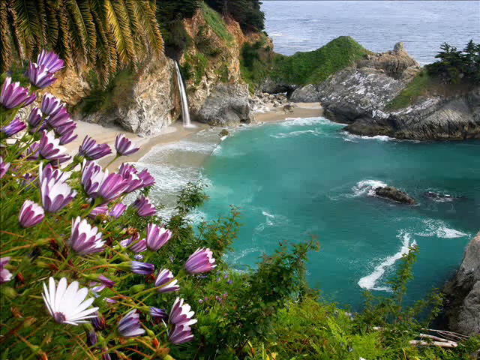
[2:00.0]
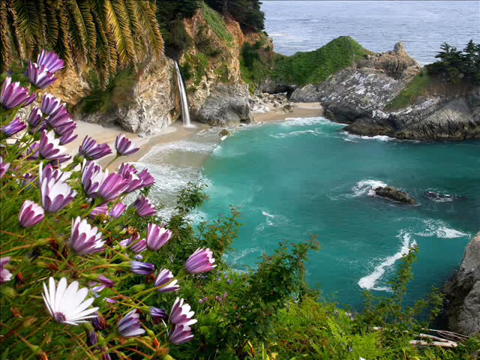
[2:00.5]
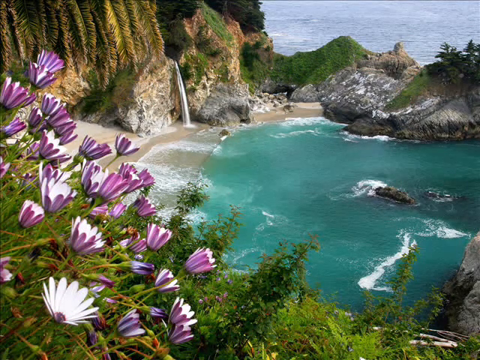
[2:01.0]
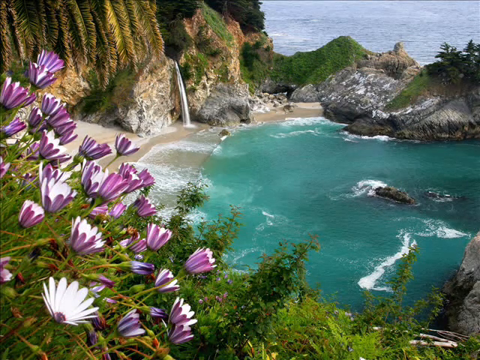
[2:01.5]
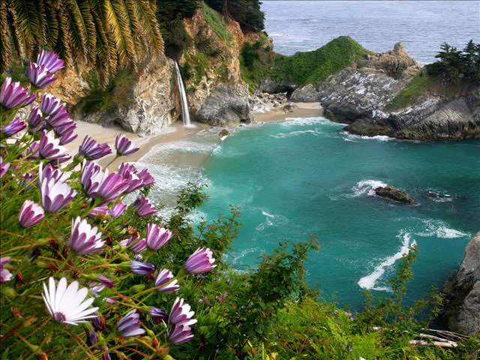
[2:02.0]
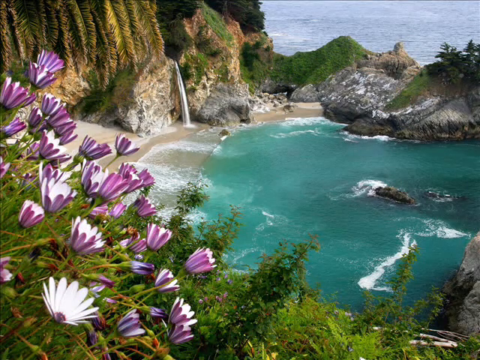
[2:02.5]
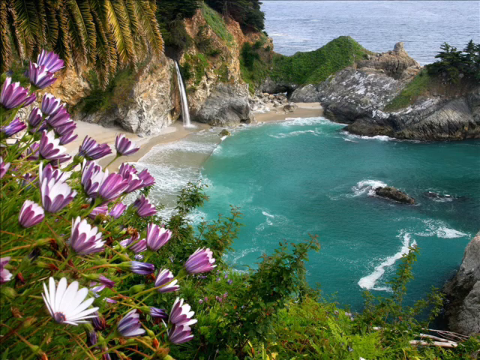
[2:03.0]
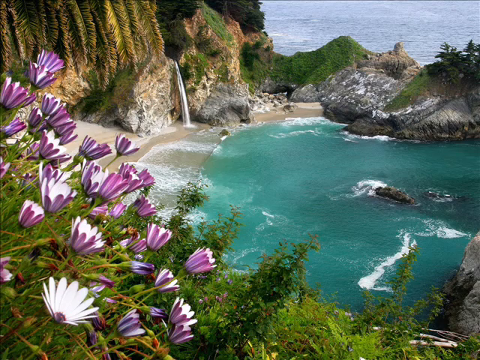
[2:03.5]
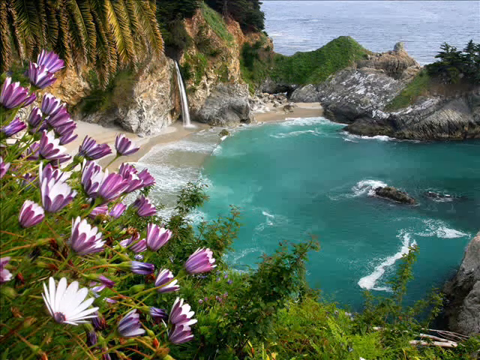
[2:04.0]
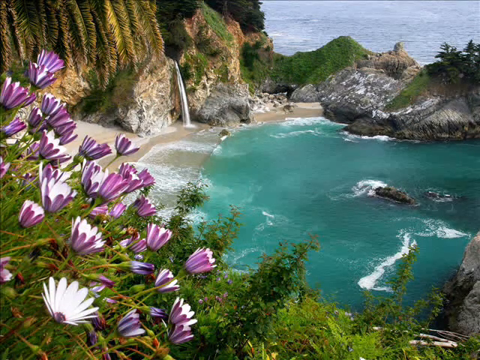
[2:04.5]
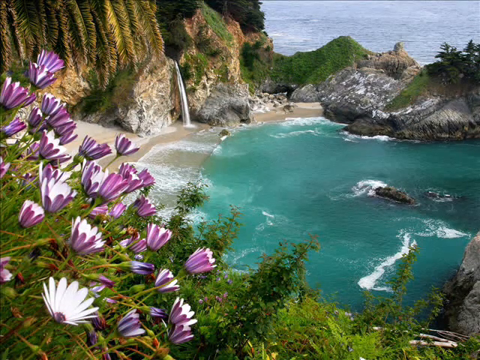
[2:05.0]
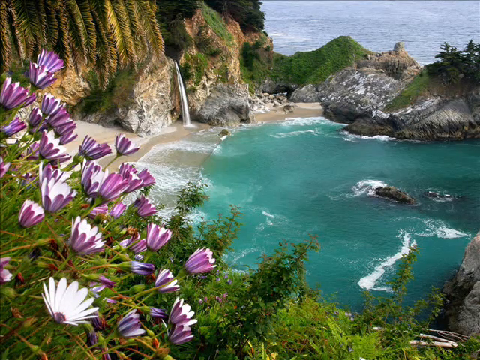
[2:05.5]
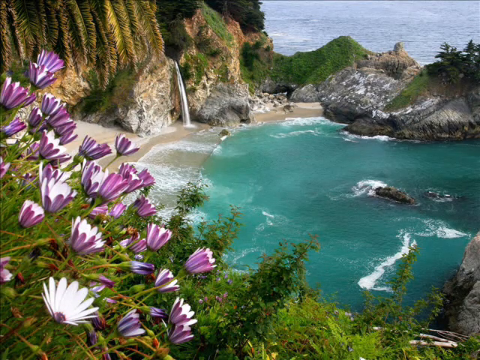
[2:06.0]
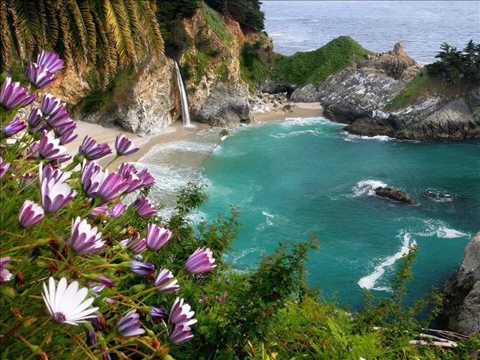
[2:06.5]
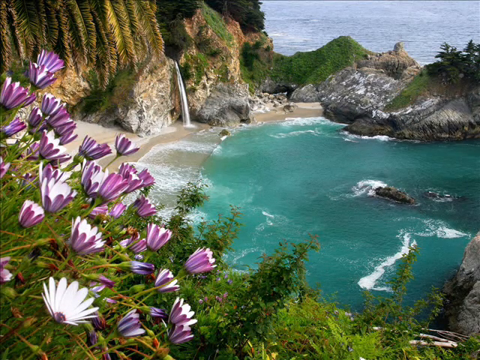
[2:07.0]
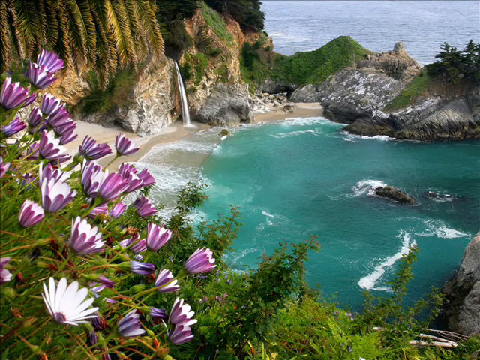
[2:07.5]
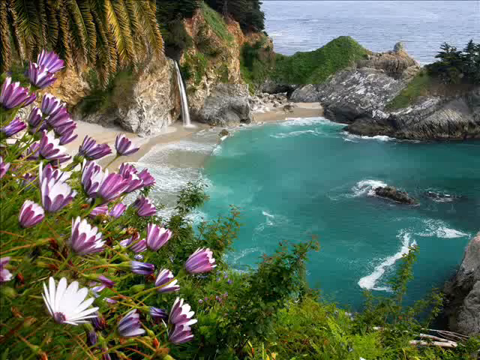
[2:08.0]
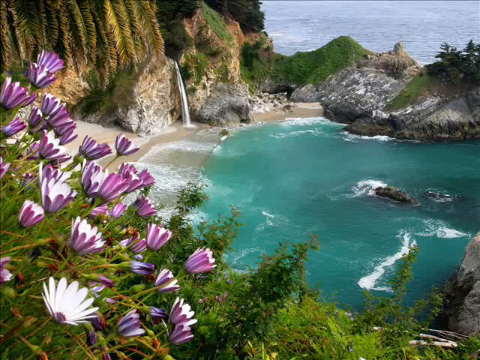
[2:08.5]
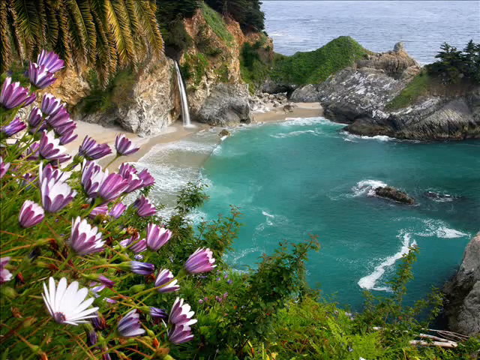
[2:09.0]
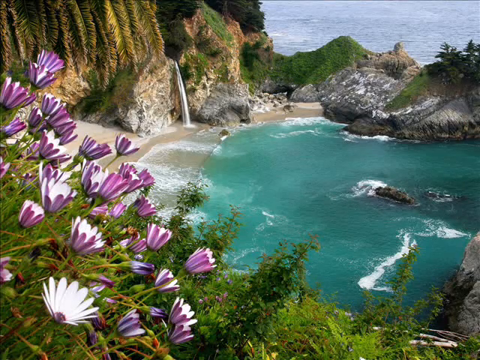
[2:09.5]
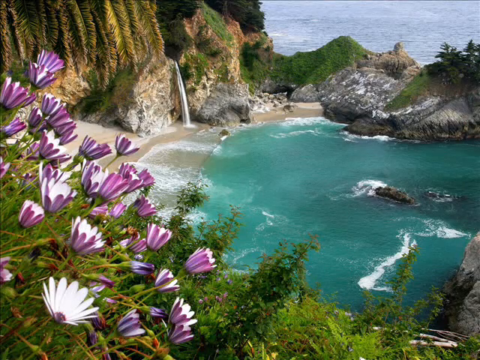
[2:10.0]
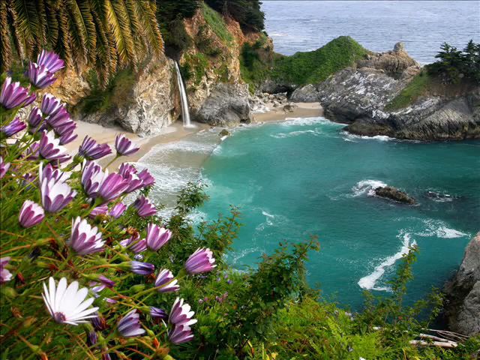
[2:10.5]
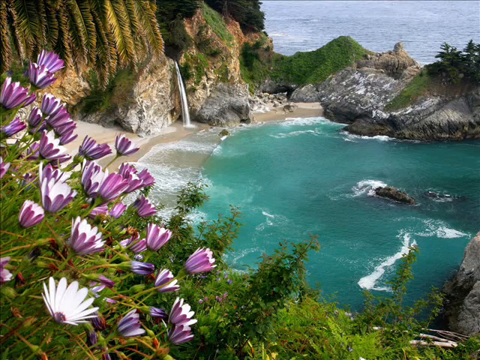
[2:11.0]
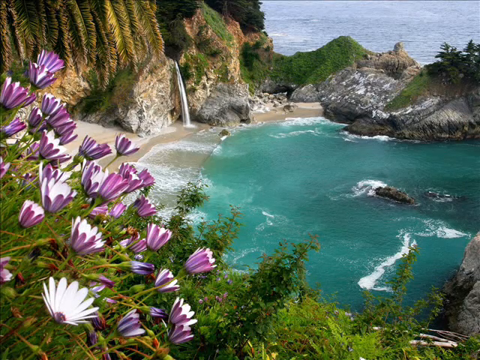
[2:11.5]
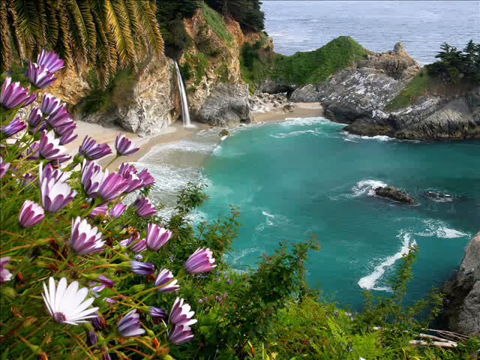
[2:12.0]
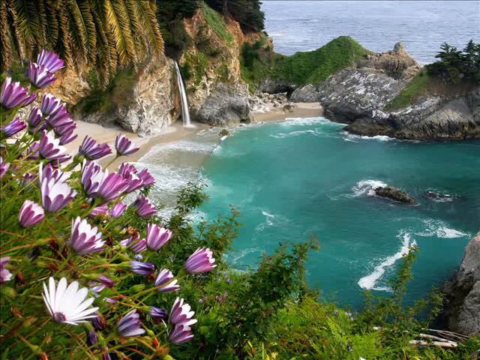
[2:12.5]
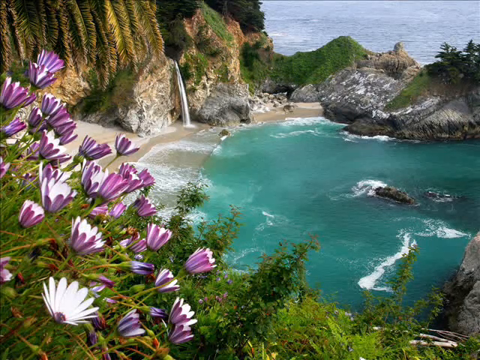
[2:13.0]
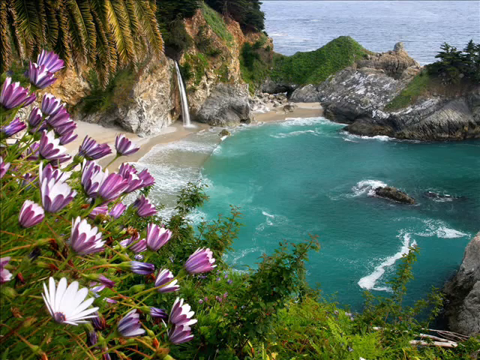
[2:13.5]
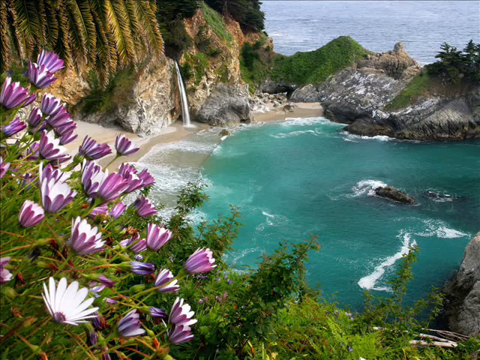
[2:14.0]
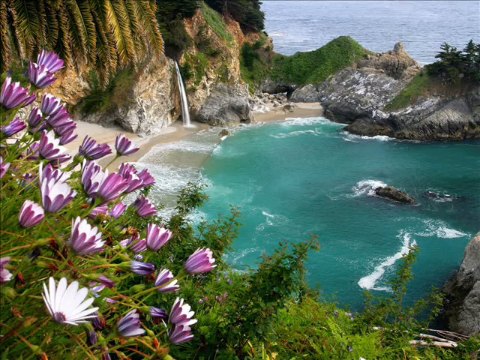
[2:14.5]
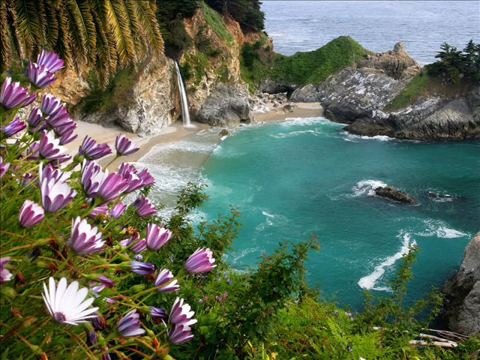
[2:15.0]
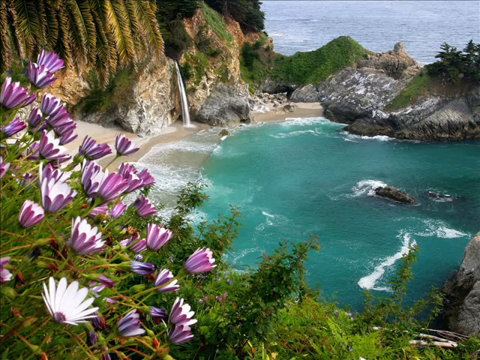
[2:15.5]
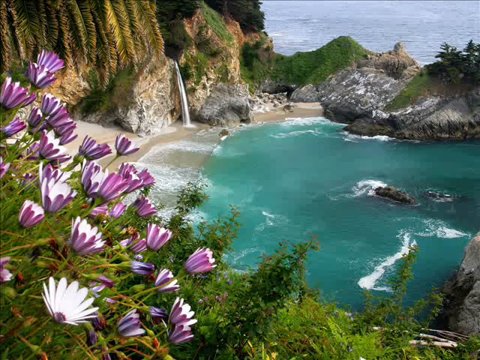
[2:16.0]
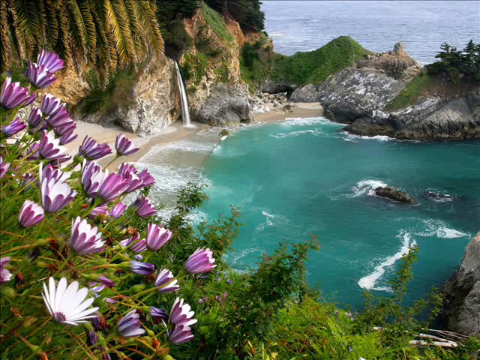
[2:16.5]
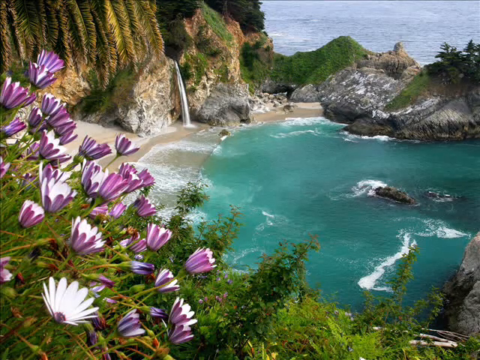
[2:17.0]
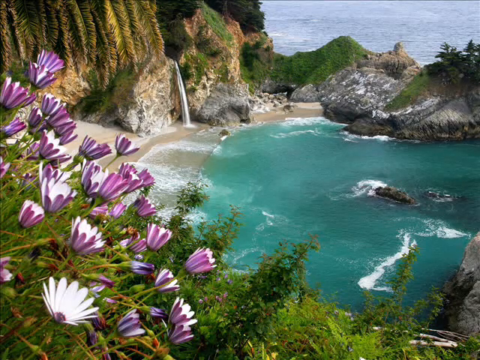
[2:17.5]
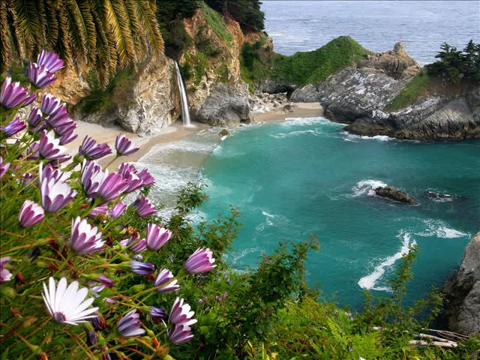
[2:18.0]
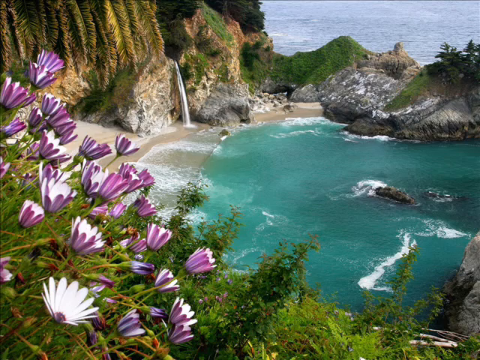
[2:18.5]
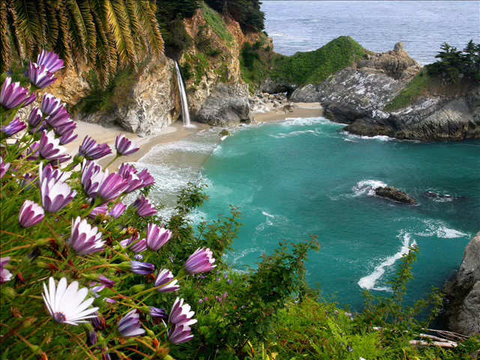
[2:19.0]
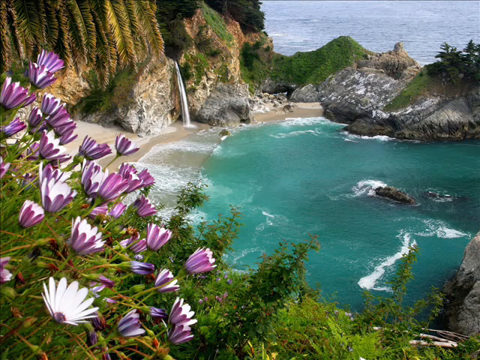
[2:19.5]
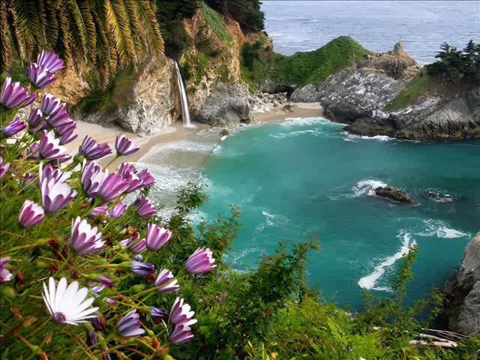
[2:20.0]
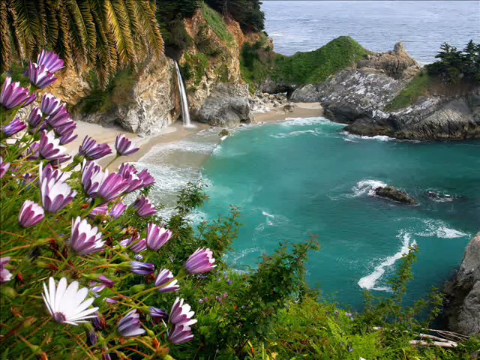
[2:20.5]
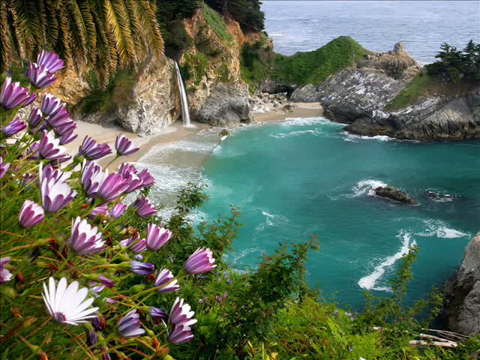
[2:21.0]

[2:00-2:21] In the still image, the tallest rock structure becomes less lush and green and shows more brown spots as it goes from the farther, lush side toward the water of the shore; the rocks at the bottom are a grayish color, probably worn down by water splashing against them. A little groove in the center area has water streaming out, forming a small baby waterfall. The rocks to the left of the waterfall are similar: those at the bottom are a whiter gray, those above a more barren brown, and further up there seems to be more lush green growth on top. In the top left corner is a bunch of tropical plant leaves, probably hanging down from a tree or several trees, angling down a little toward the pool below.